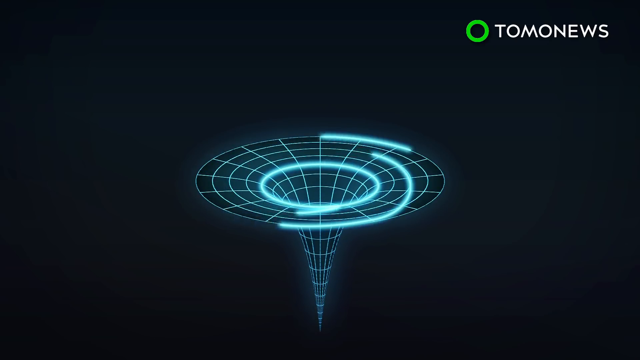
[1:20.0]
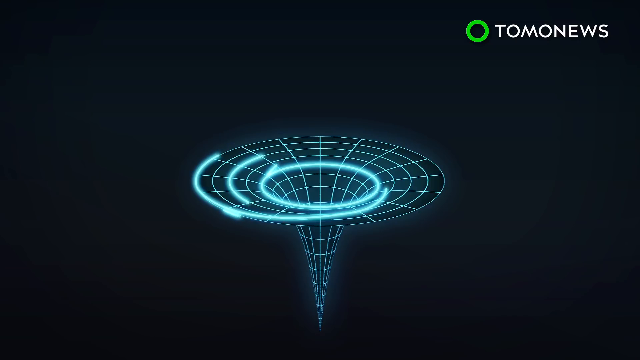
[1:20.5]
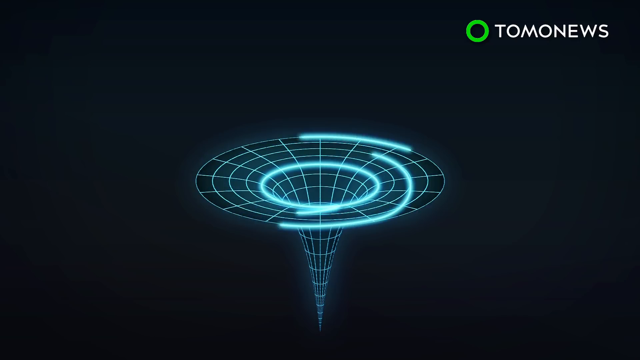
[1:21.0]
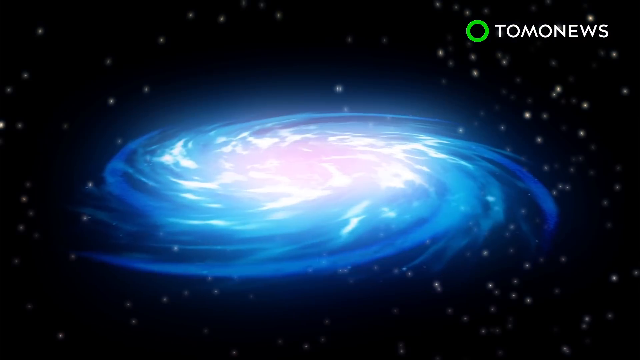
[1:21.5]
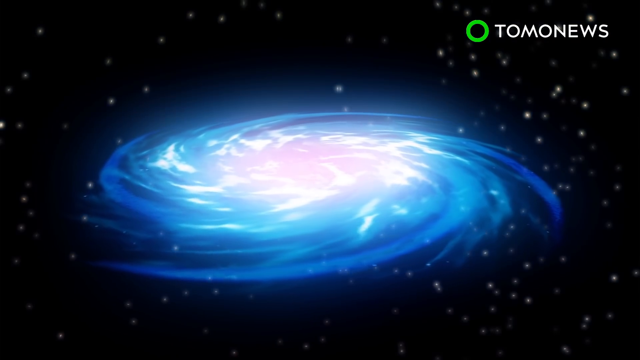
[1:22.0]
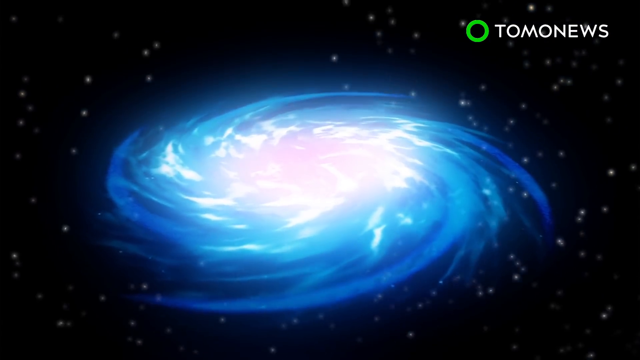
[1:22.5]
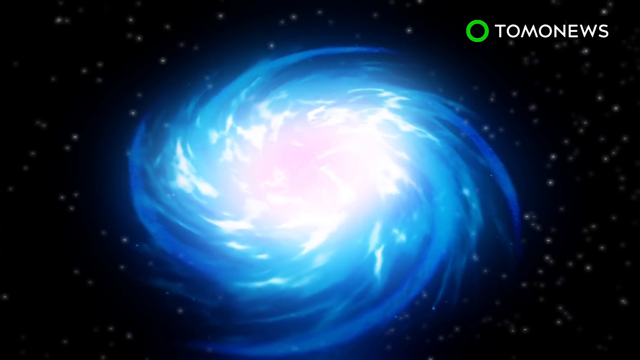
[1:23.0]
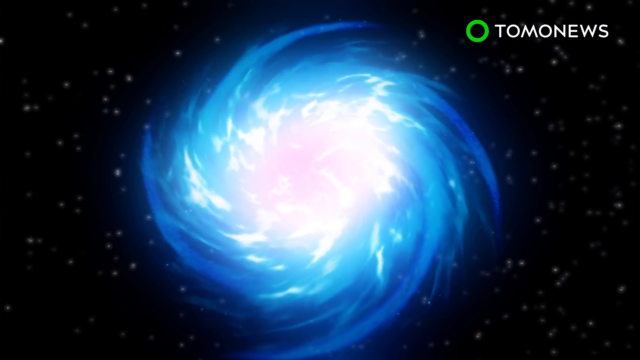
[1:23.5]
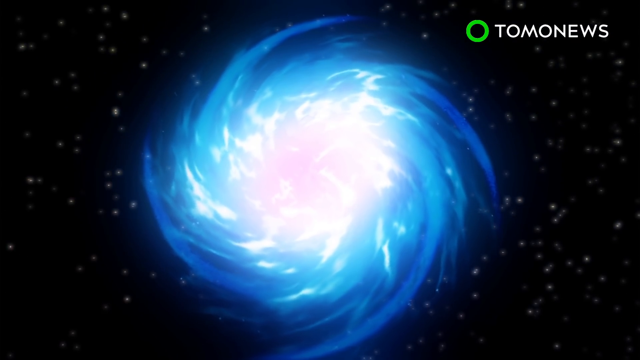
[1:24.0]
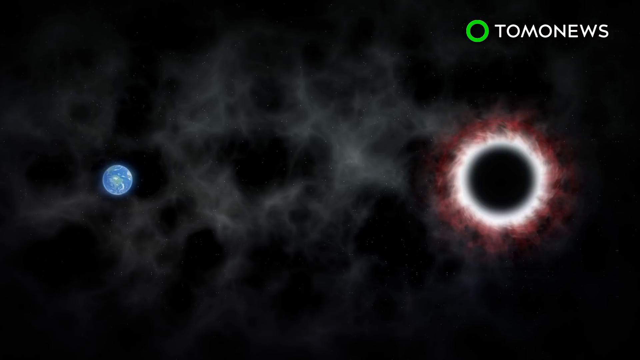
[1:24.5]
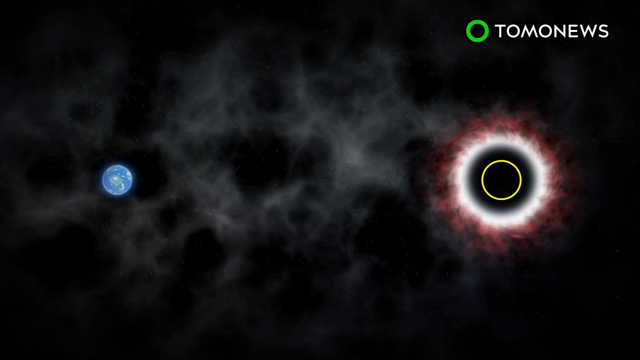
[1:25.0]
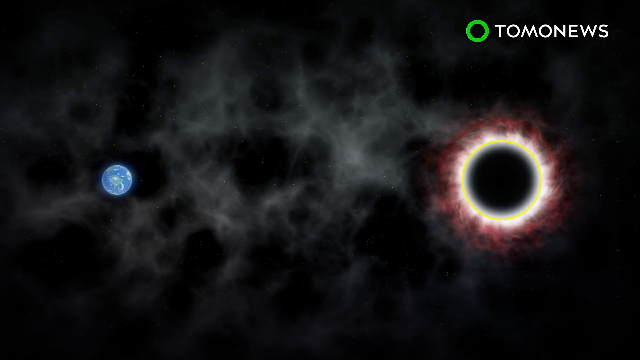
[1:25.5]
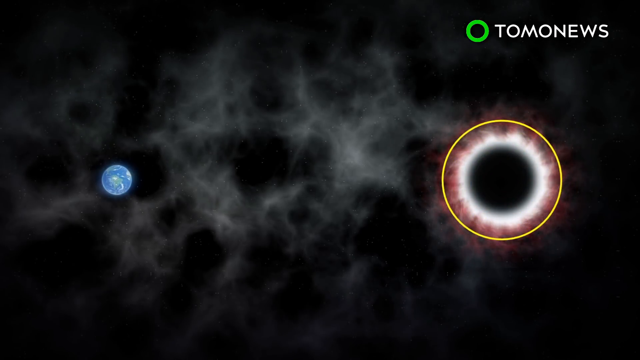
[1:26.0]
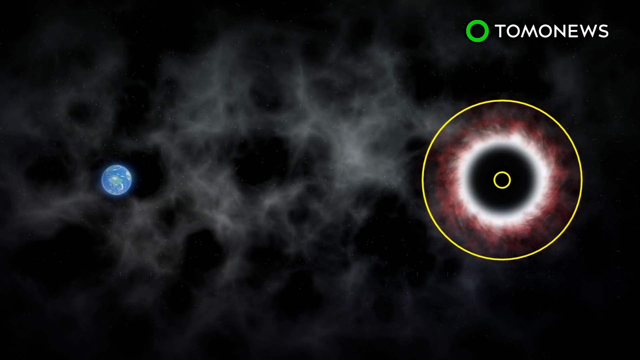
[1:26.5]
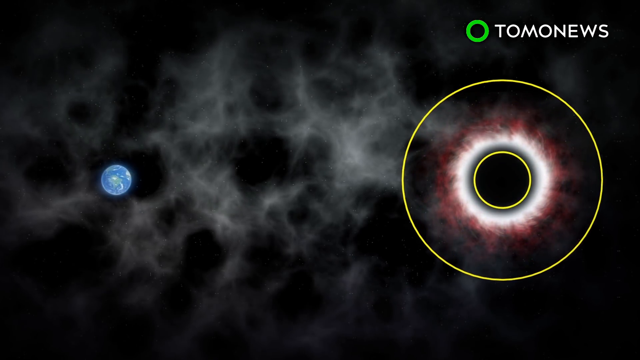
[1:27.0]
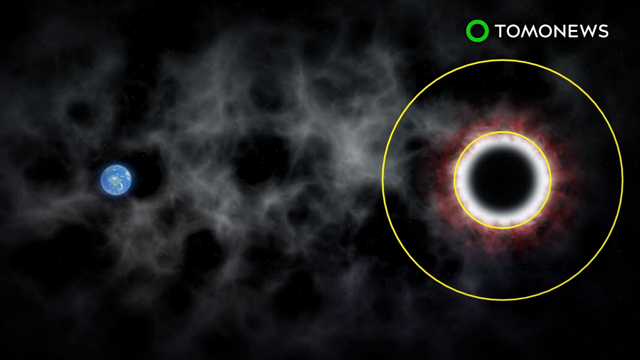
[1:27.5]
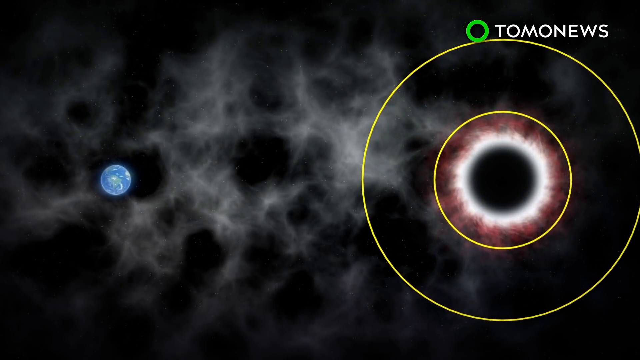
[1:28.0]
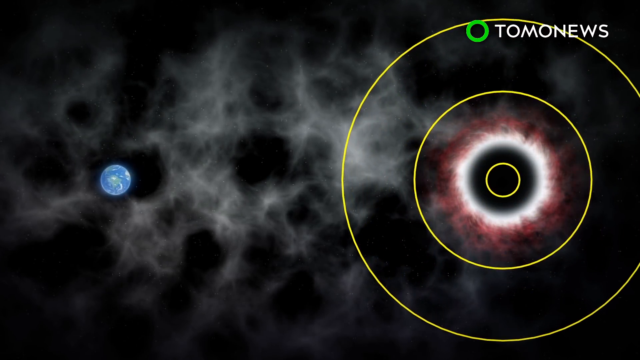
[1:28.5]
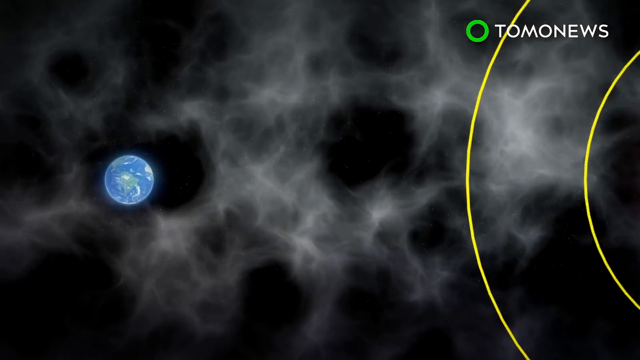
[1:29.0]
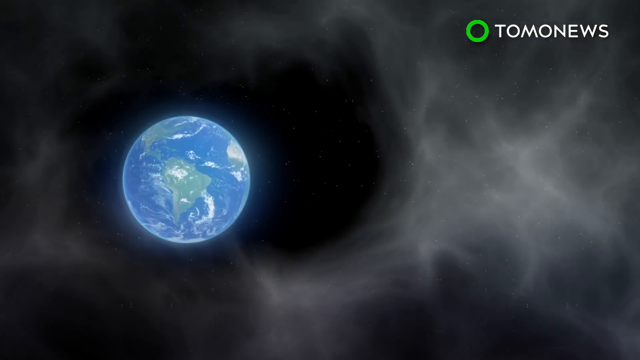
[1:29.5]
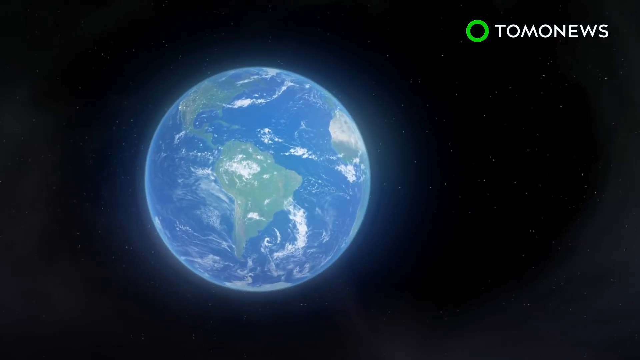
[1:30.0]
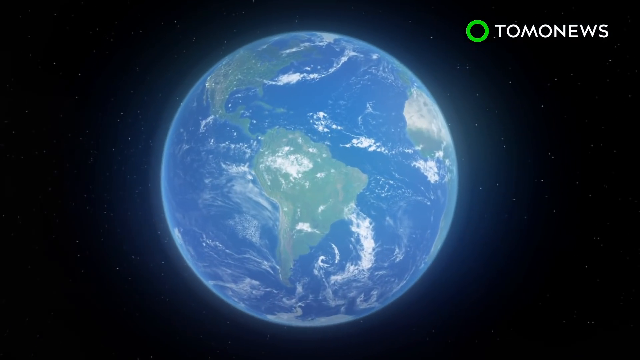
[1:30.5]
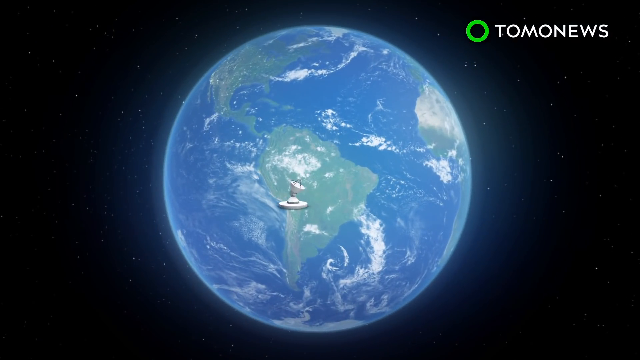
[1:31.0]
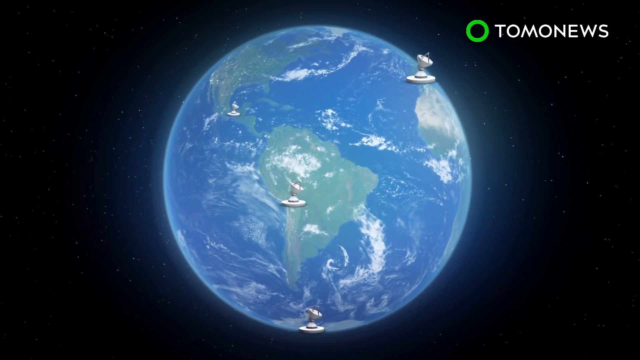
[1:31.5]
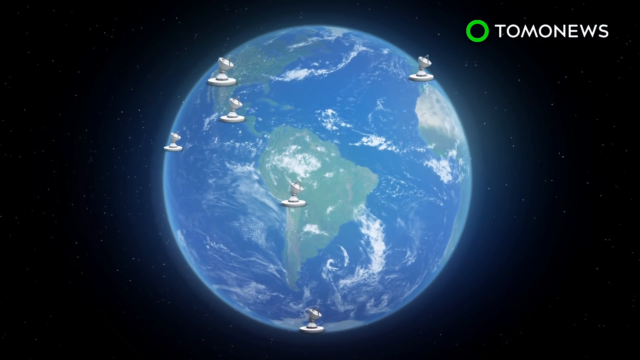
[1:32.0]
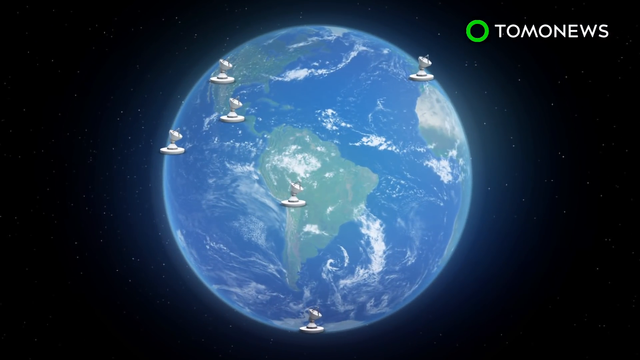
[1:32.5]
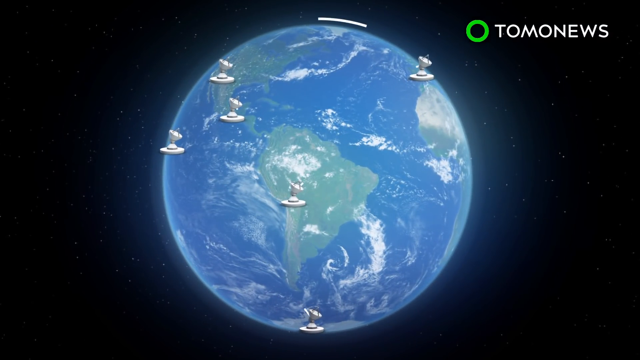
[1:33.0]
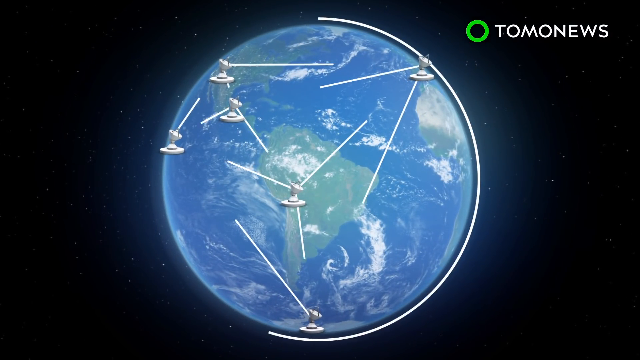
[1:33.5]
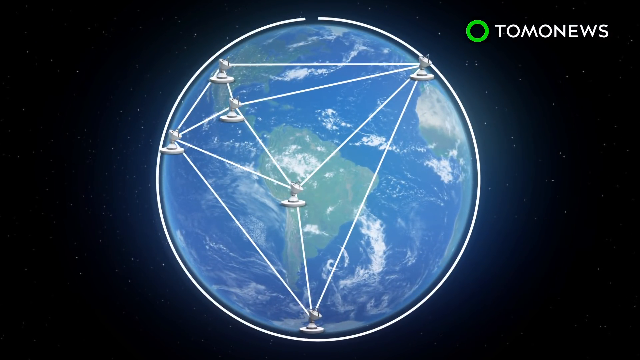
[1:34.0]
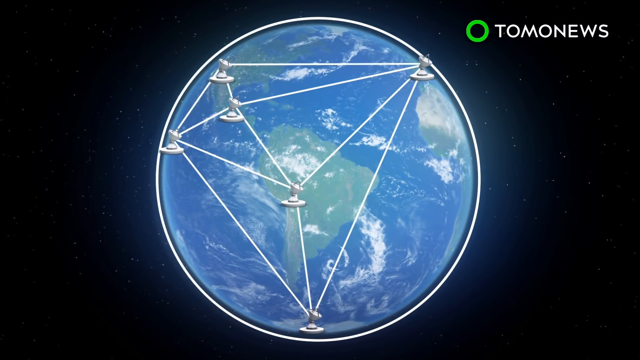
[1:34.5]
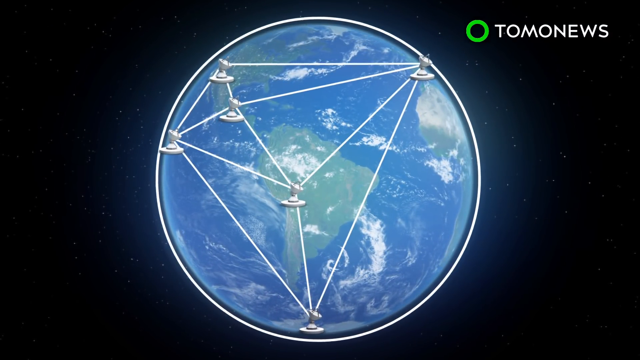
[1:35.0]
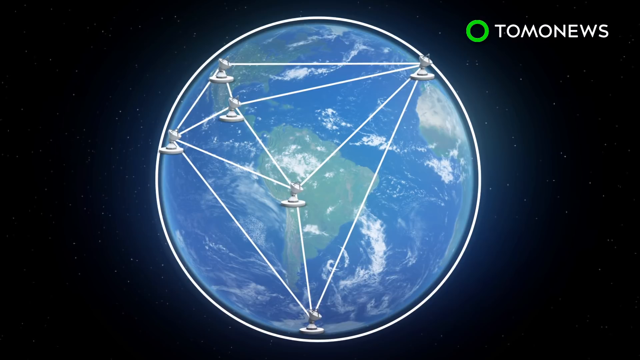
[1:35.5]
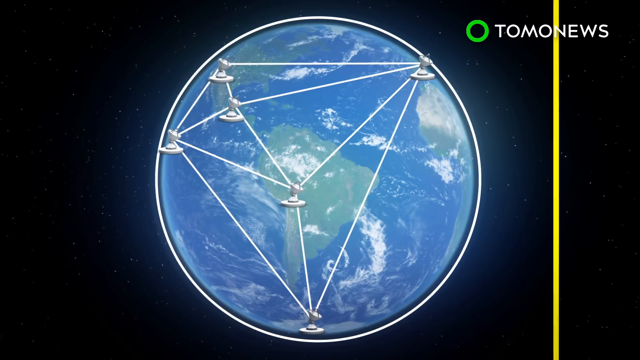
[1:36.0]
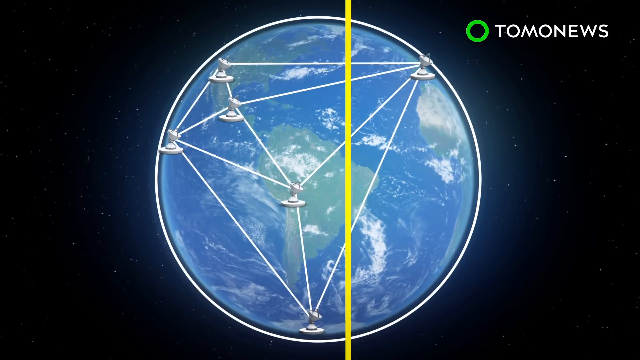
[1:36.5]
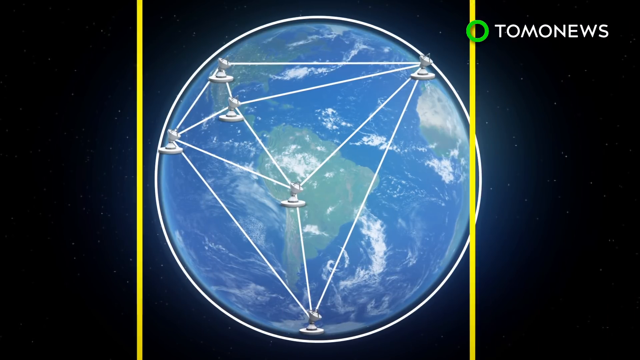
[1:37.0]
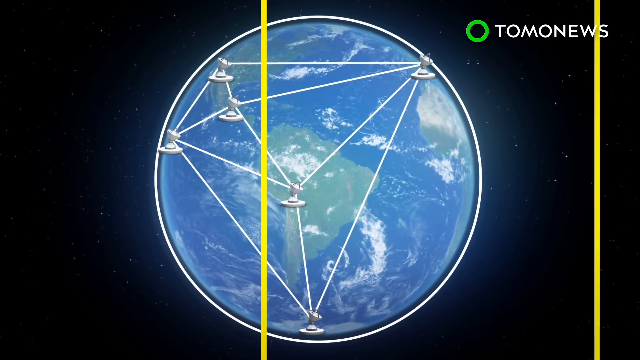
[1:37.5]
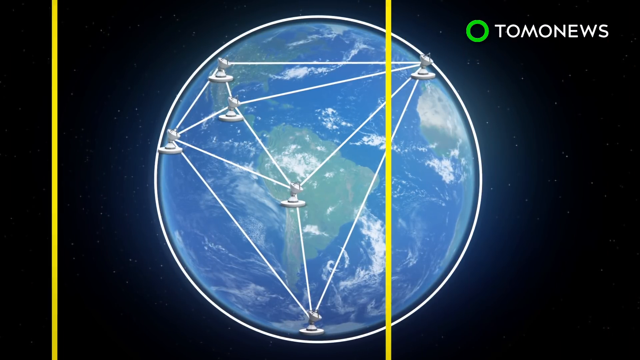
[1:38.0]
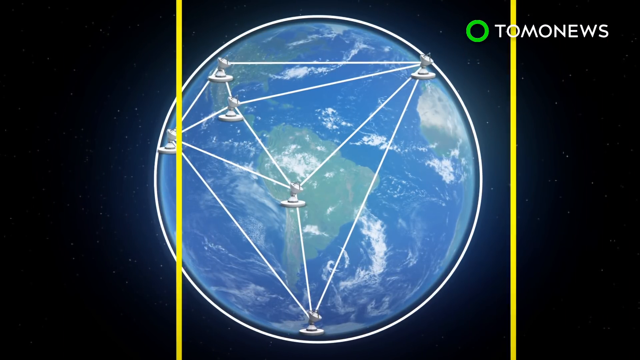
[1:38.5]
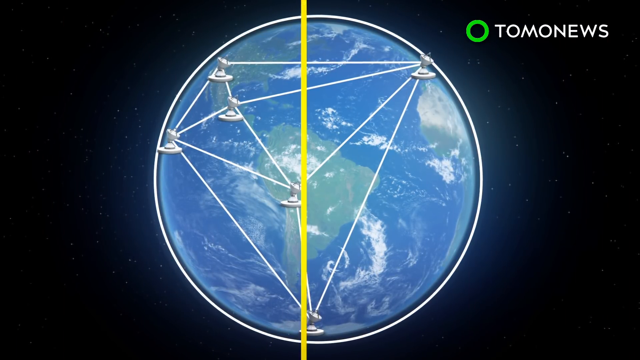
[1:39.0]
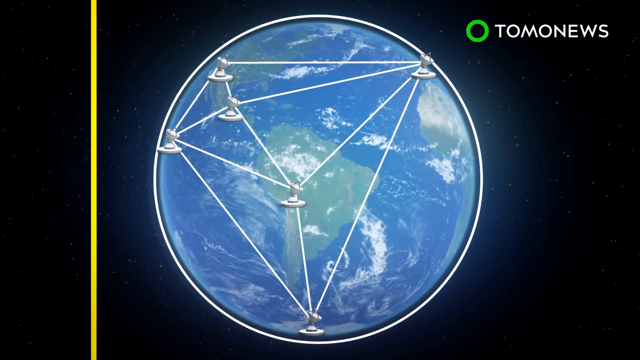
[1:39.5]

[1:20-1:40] The headline is the Event Horizon Telescope. High up, the moon is changing to a strange colour and seems to be falling down, going deeper and deeper. A big satellite is shown. Clouds are visible, and the Earth has satellites at every corner.